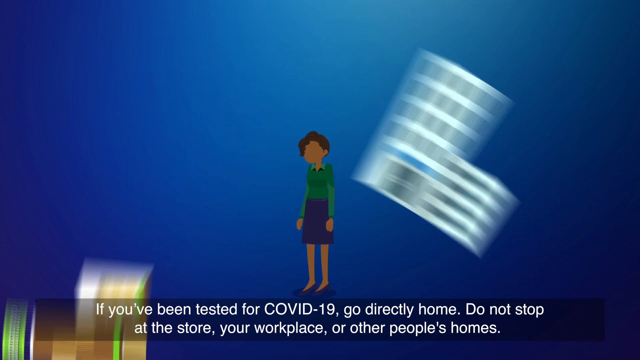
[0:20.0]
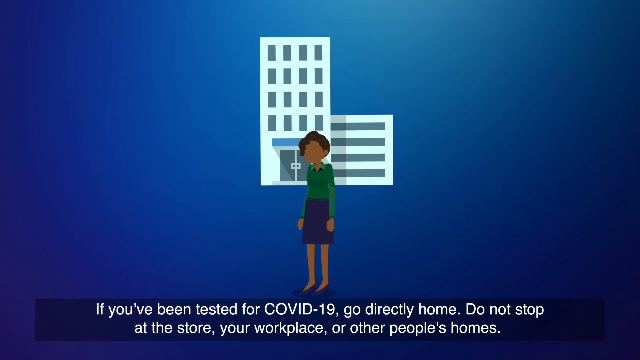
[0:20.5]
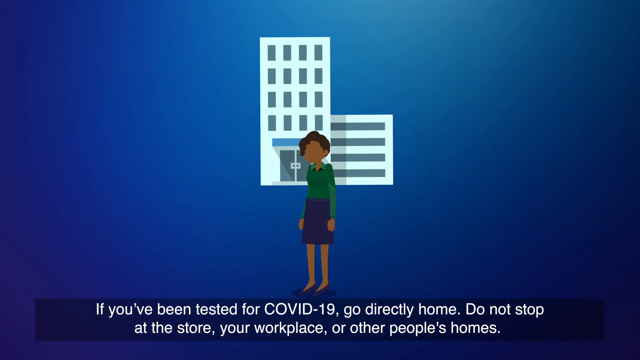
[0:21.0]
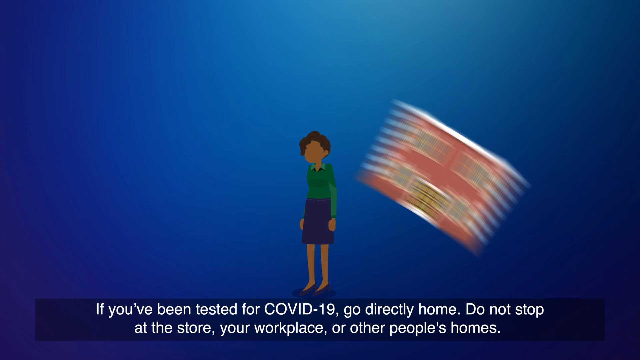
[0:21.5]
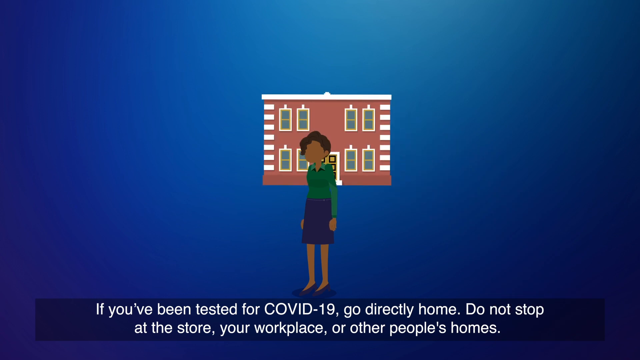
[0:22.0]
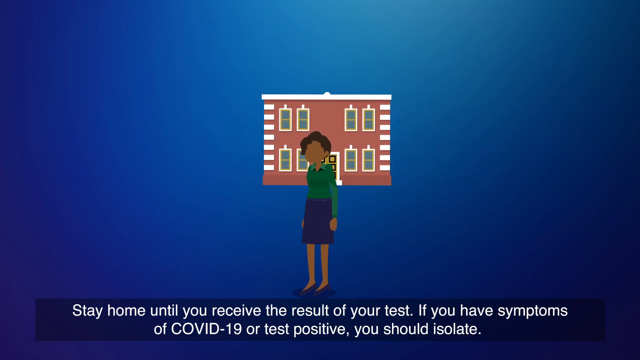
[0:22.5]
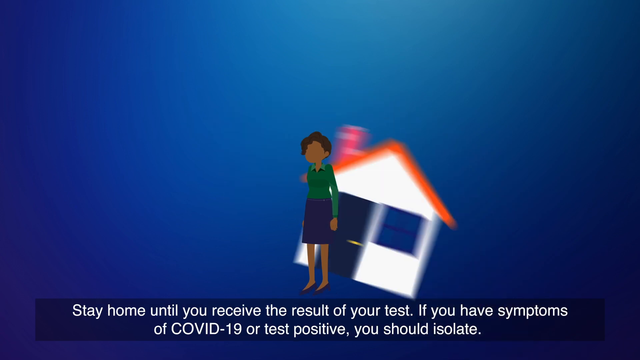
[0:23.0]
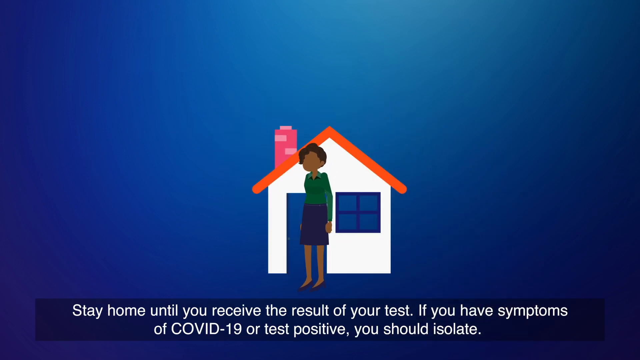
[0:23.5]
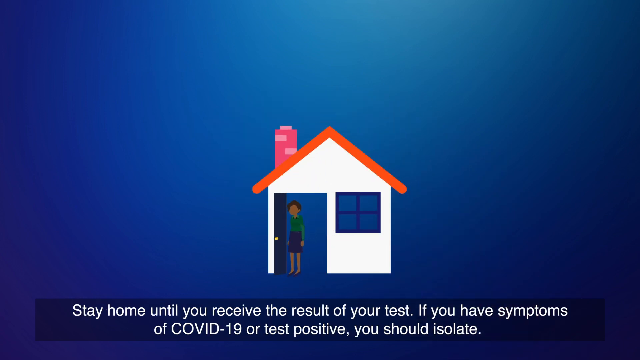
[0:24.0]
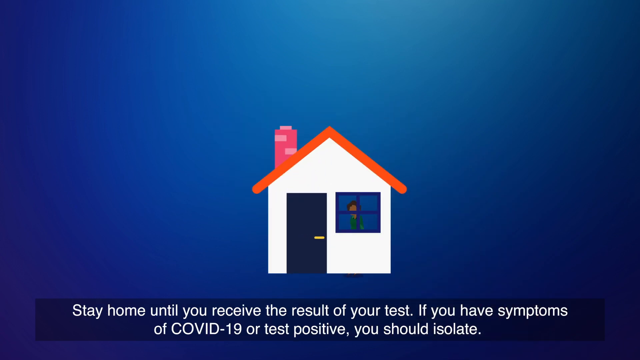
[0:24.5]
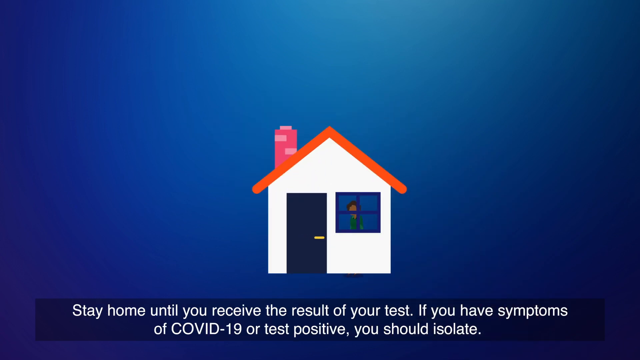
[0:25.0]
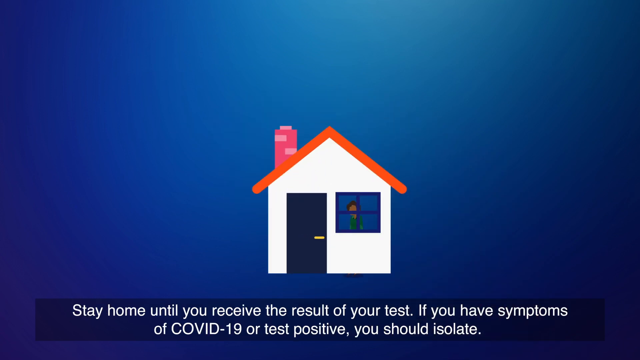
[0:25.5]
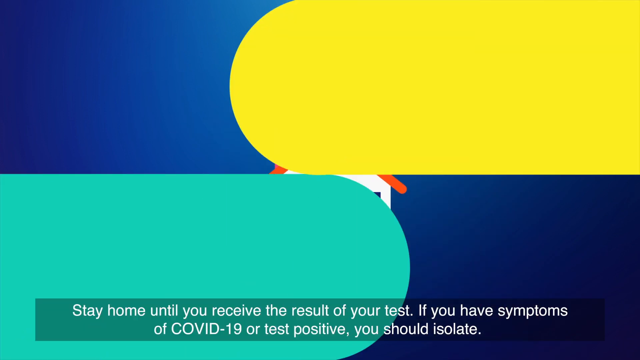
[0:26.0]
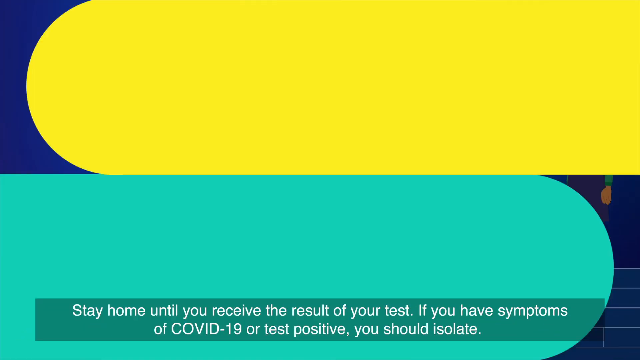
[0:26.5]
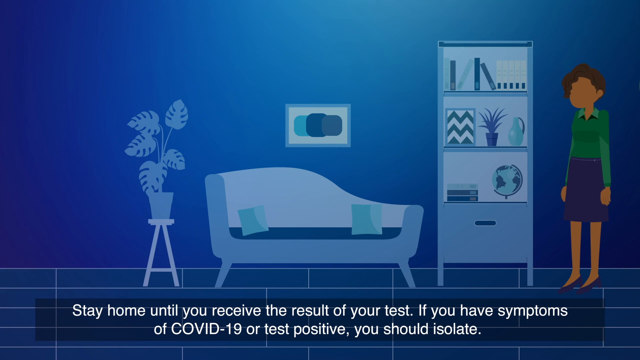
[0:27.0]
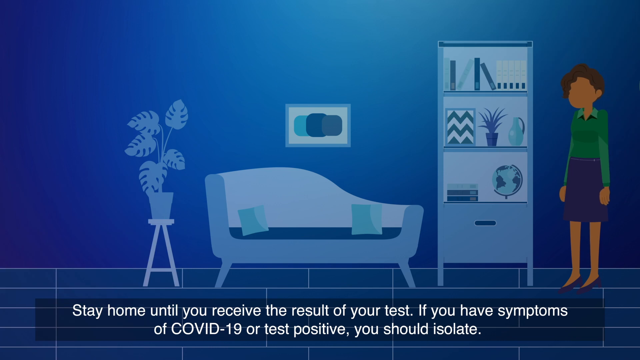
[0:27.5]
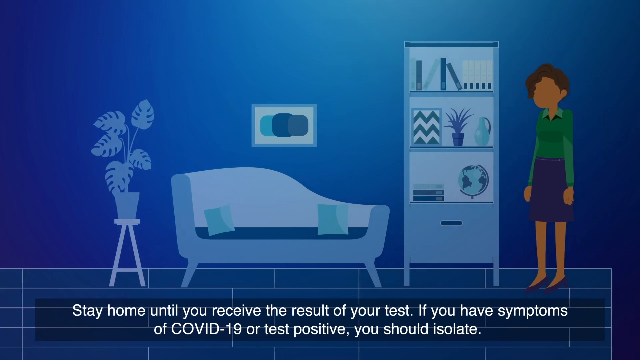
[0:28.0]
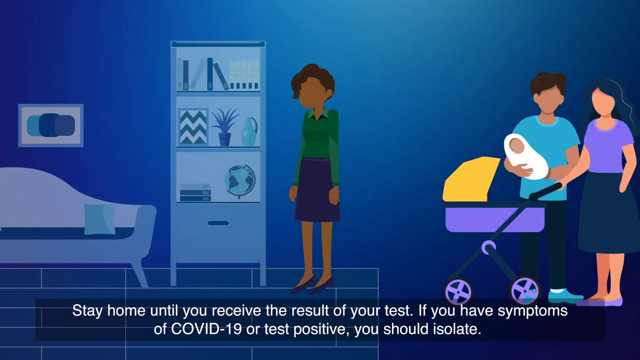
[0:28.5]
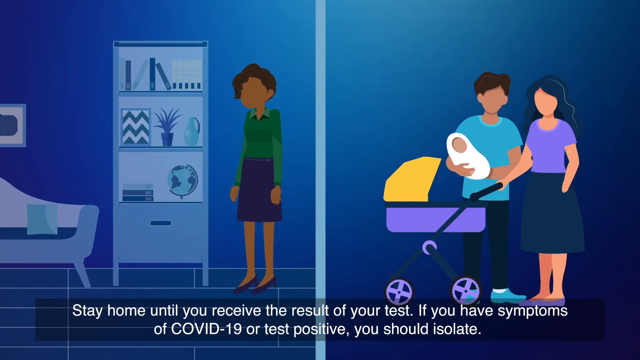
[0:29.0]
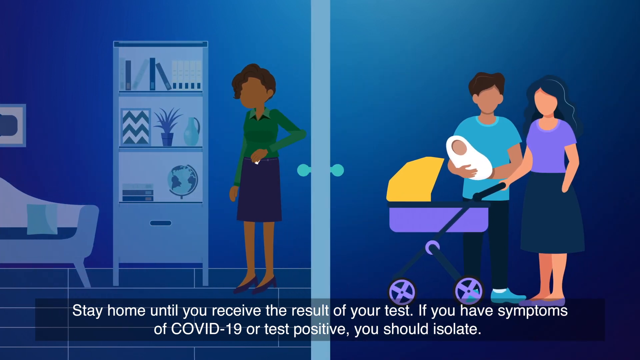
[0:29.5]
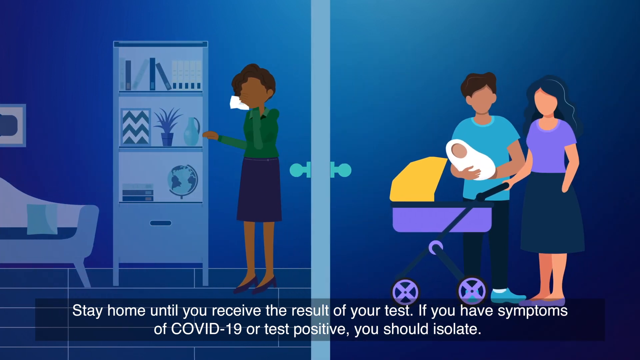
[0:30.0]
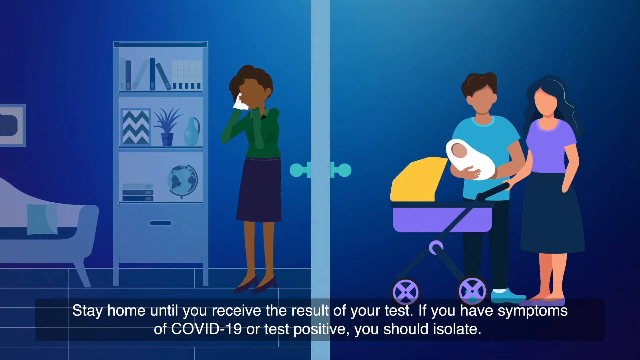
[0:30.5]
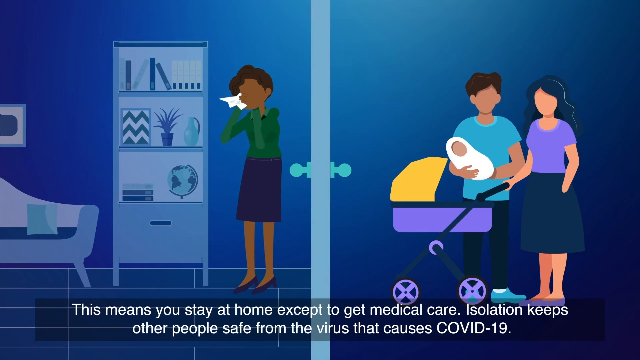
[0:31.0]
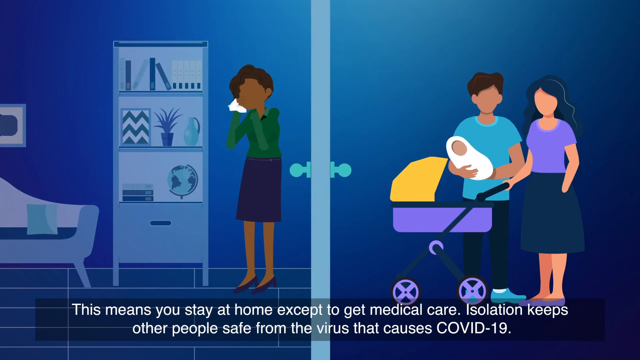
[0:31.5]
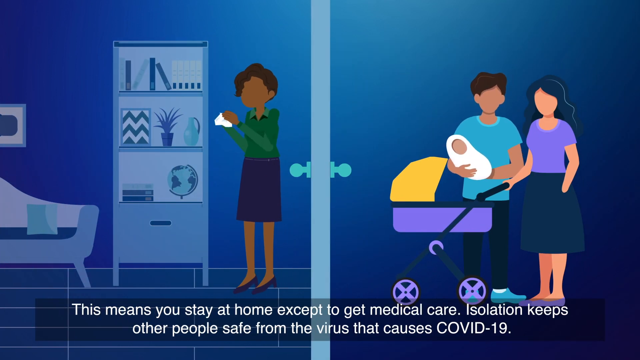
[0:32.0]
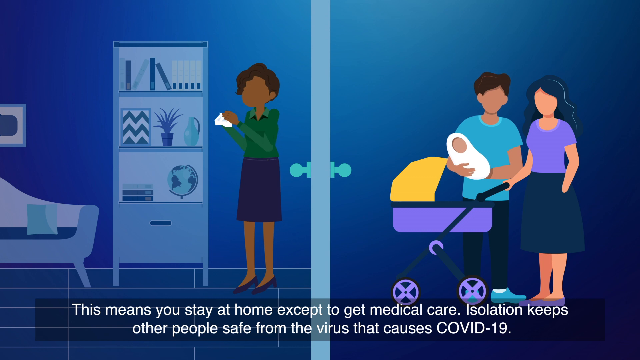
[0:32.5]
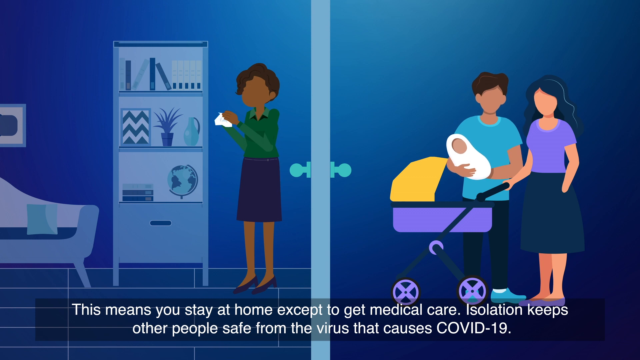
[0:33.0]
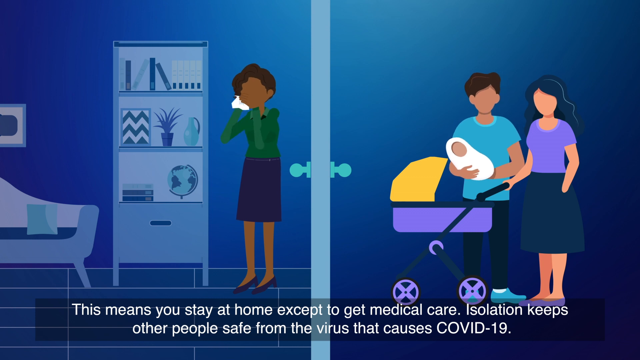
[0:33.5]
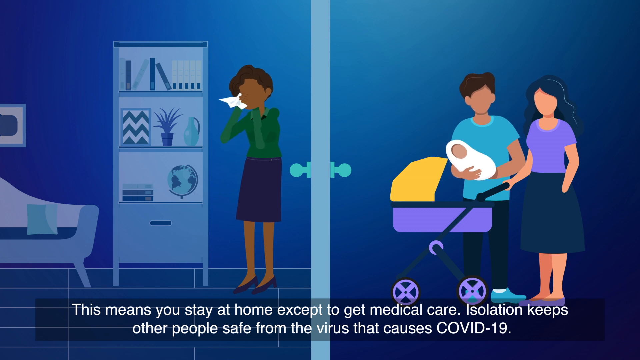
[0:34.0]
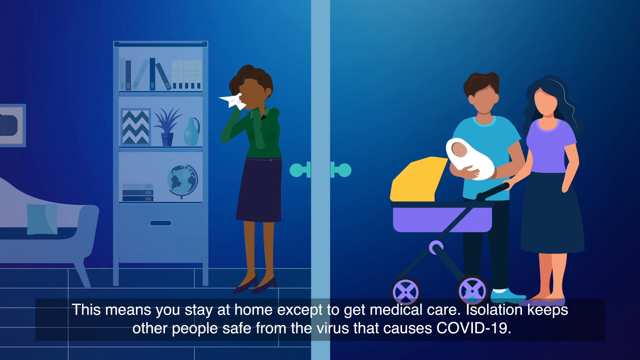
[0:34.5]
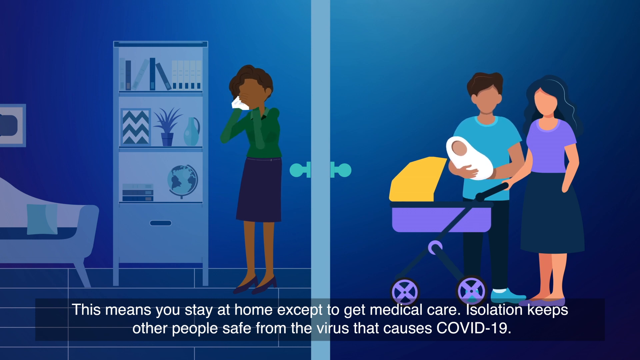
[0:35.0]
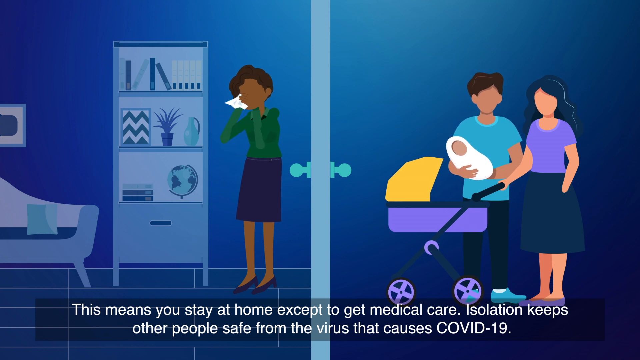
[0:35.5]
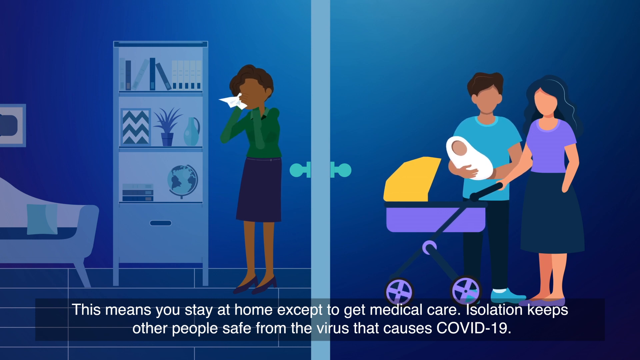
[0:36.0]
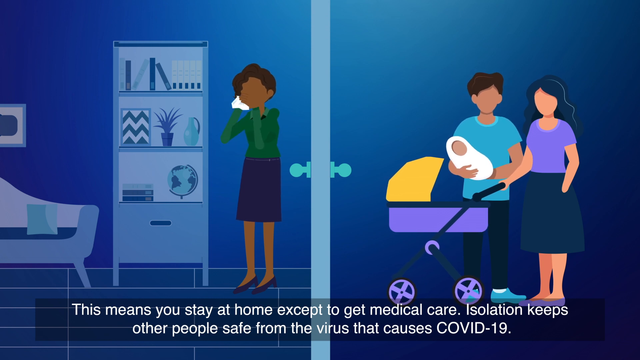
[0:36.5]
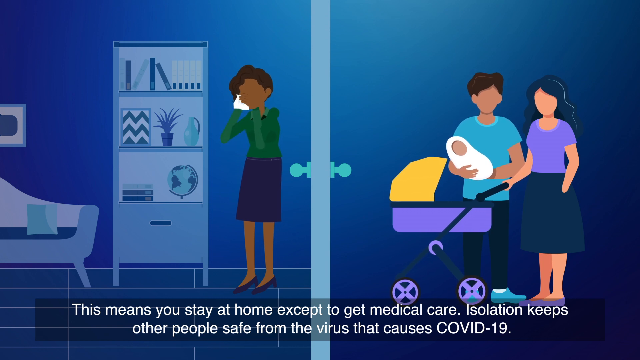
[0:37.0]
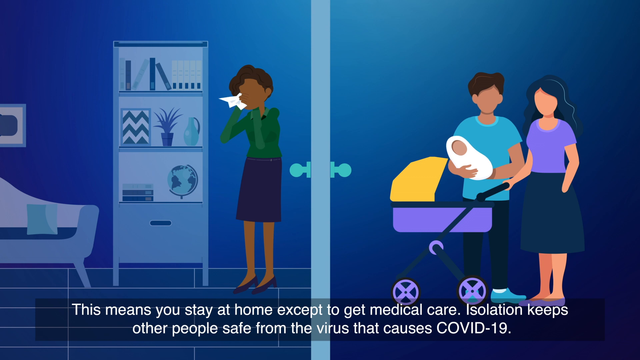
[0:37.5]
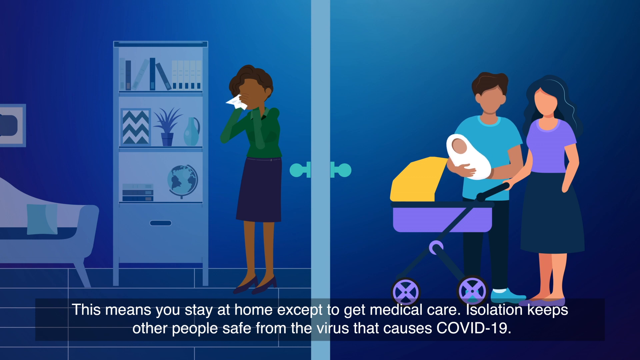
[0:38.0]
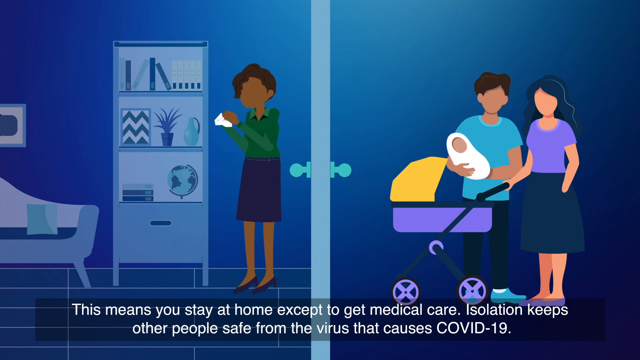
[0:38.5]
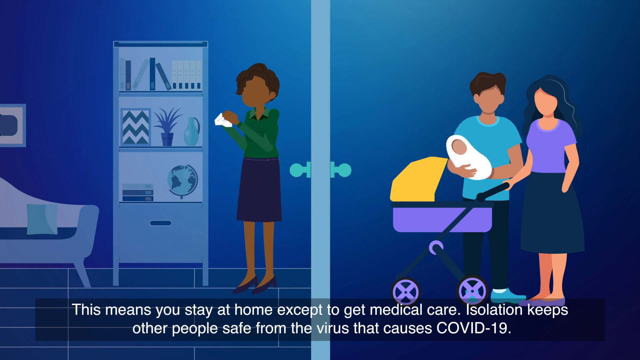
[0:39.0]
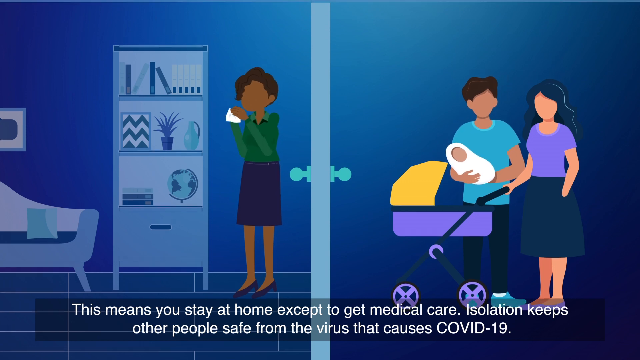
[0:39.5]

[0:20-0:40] On a blue screen, a woman stands in the center. She is an African-American woman with very short brown hair, wearing a long-sleeved green top, a purple skirt and purple high heels, and she has no face. At the bottom of the screen, white letters read "if you have been tested for COVID-19, go directly home. Do not stop at the store or your workplace or other people's homes". An image of what looks like a hospital appears beside her, then scrolls down, and an image of what looks like a school appears beside her. Next an image of what looks like a house appears; the house is white with an orange roof. The door opens, the woman goes inside, and she is standing behind the window. The inside of the home is then shown, in blue, light blue and white. A couch is in the center, and to the left of the couch is a stand with a pot on it that has a plant growing out of it. The woman is standing to the right of it, and there is something like a bookshelf. A couple with a baby carriage and a baby appears outside the door, and a doorknob appears. The woman in the green shirt and purple skirt is blowing her nose with her back to the door. Some words appear at the bottom of the screen.